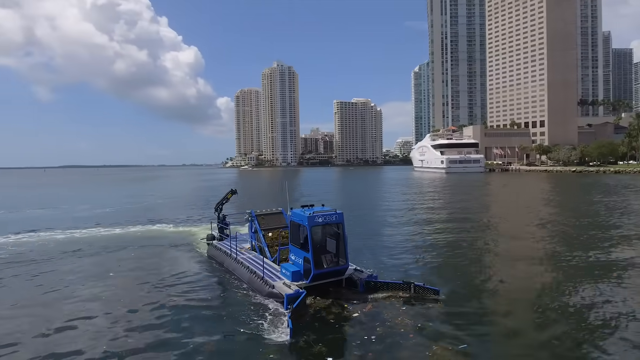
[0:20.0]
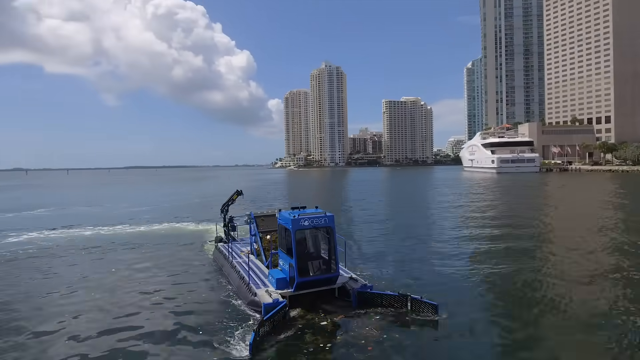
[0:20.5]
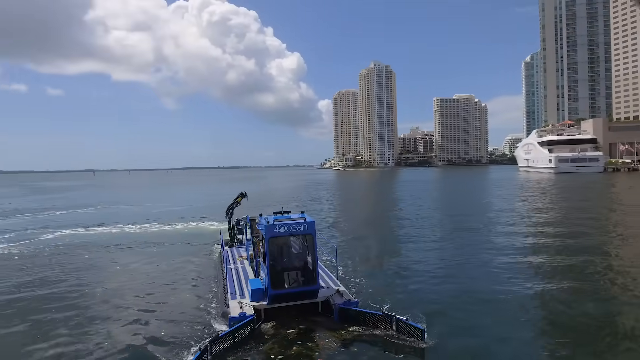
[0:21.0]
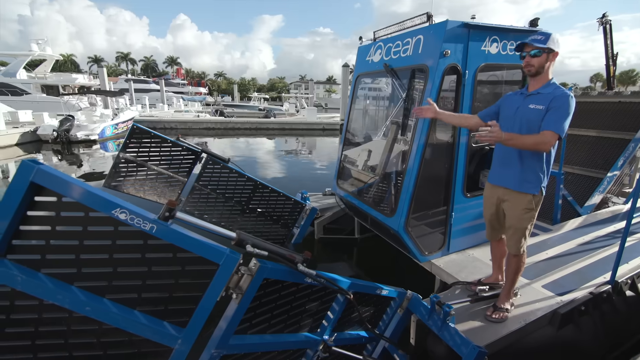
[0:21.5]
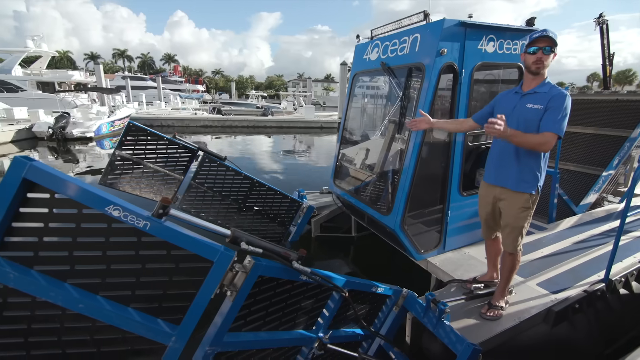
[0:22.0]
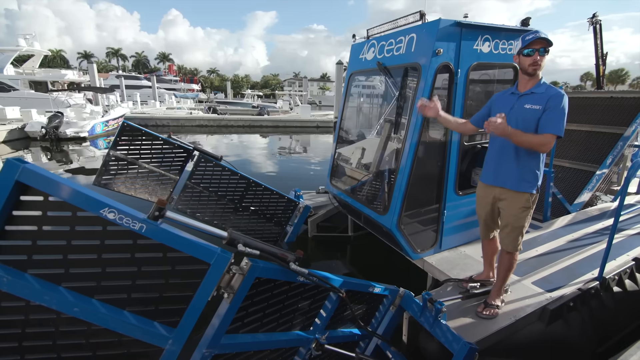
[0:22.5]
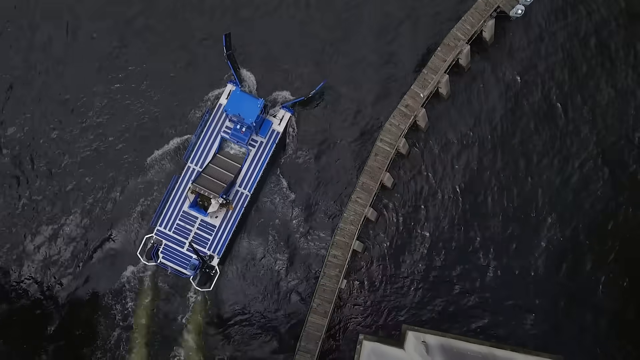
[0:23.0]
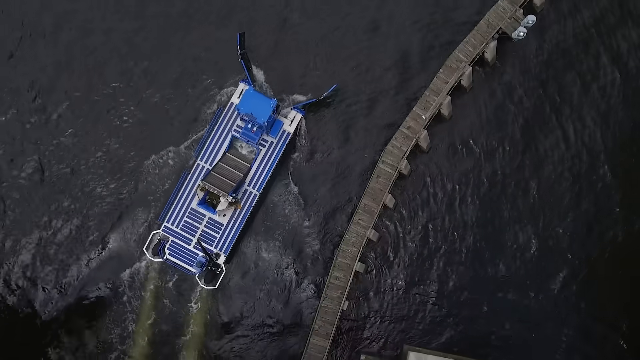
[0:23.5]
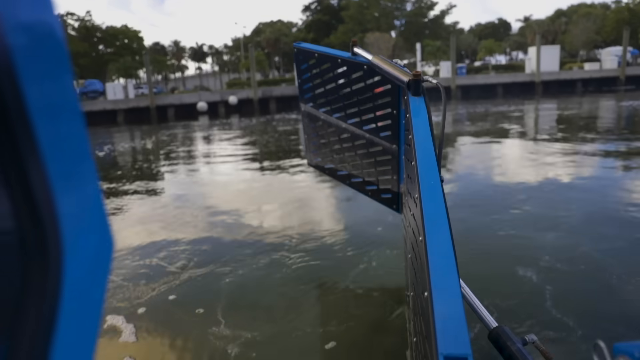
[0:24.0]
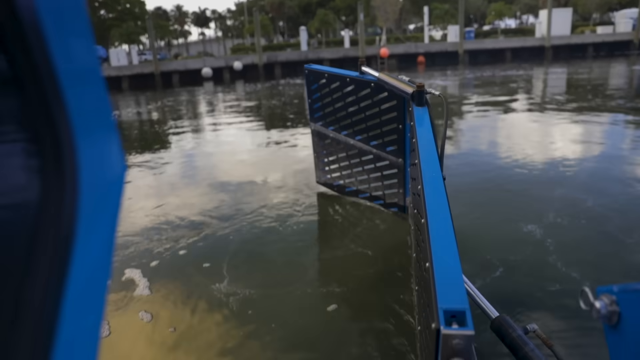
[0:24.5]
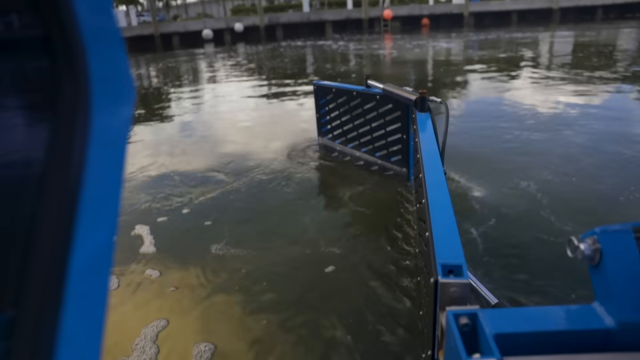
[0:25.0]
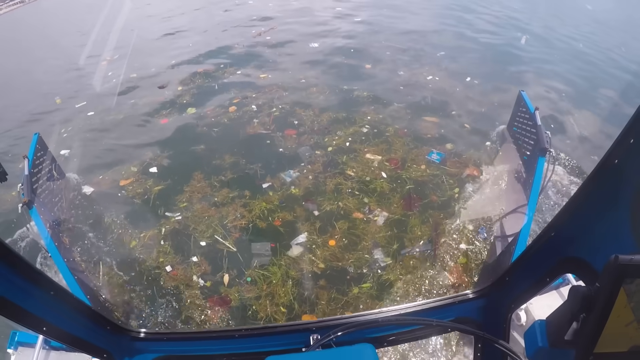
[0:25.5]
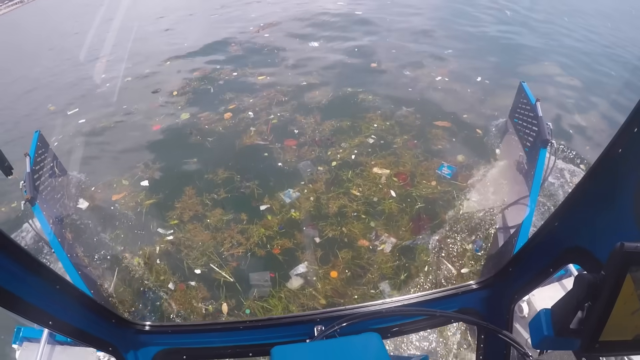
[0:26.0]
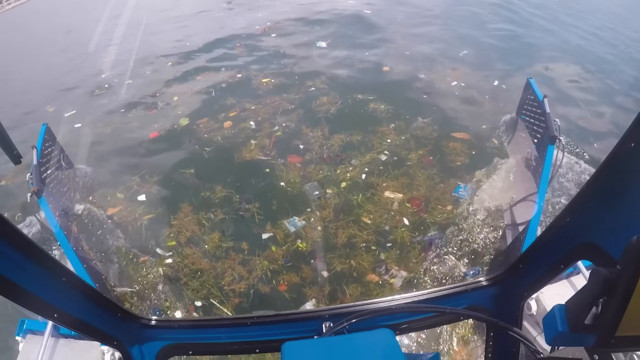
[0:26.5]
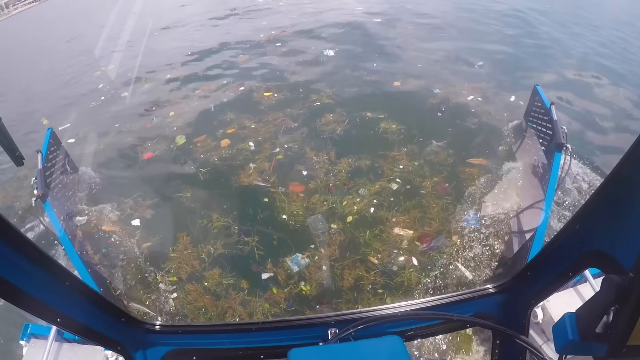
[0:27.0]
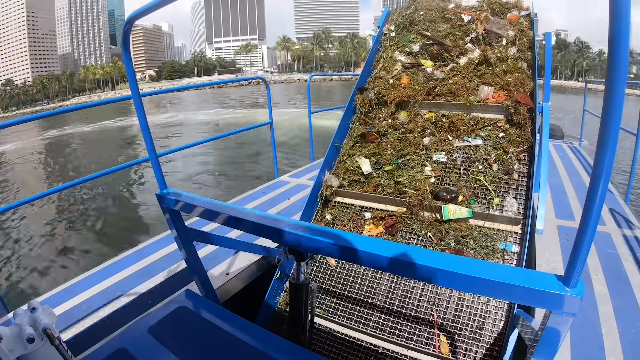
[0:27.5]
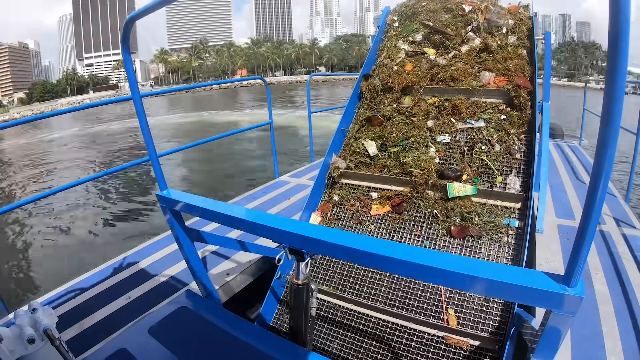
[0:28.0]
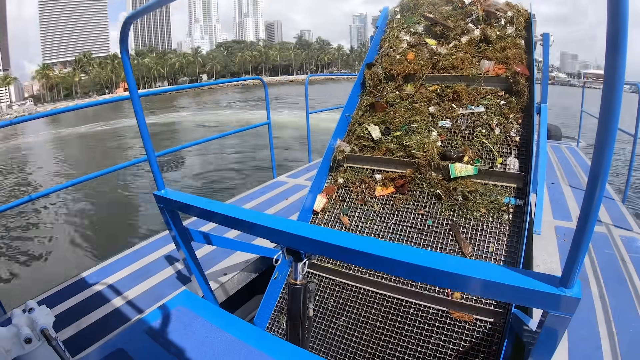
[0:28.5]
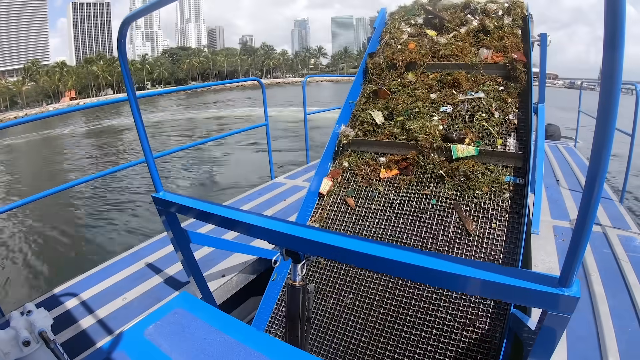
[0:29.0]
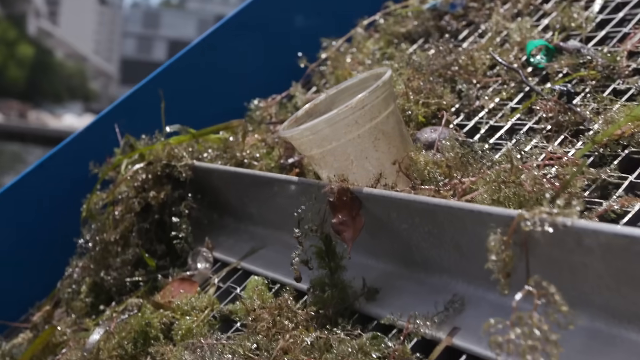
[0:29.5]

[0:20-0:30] The ocean fills the left side of the screen, and a city is on the right, with about ten large, tall buildings and the land they are on. In the middle of the ocean a blue vehicle floats; it looks like a boat and a tractor at the same time. On top of it, written in white, is the number 4 followed by the word "ocean". An aerial view of the blue vehicle follows. At its front is a large claw that opens and closes: the vehicle goes up to areas of trash in the ocean, closes the claw onto the trash, traps it and takes it out of the water. The trash pulled from the ocean ends up on a conveyor on the machine, which dumps it into the back of the blue vehicle.